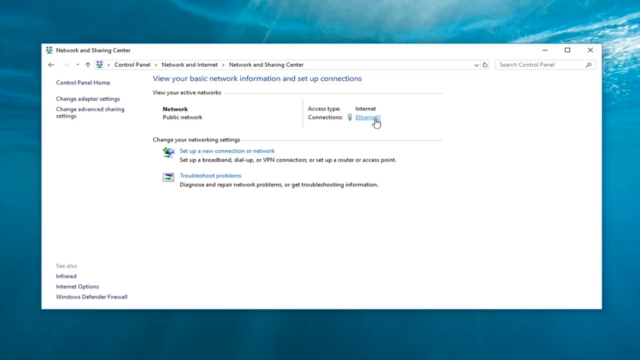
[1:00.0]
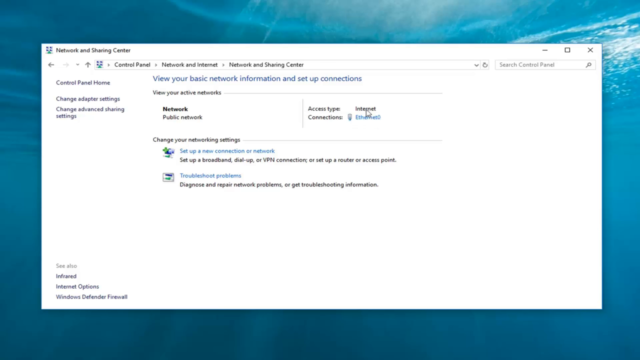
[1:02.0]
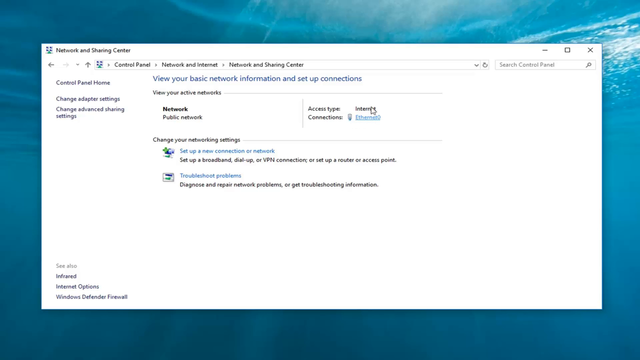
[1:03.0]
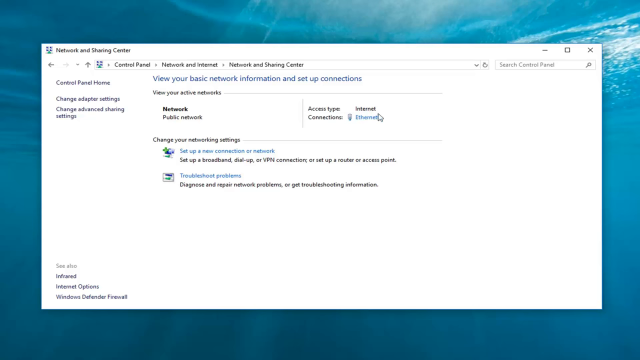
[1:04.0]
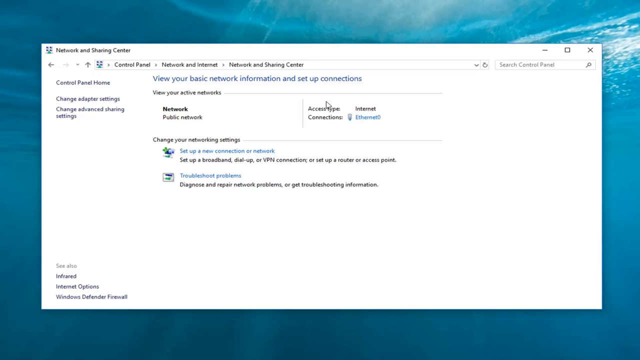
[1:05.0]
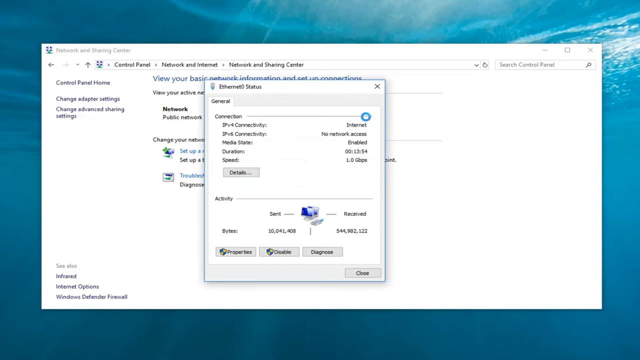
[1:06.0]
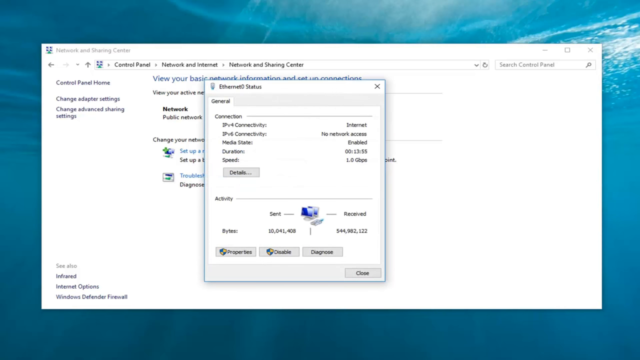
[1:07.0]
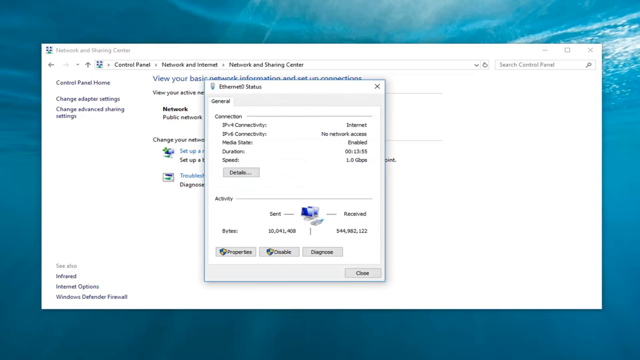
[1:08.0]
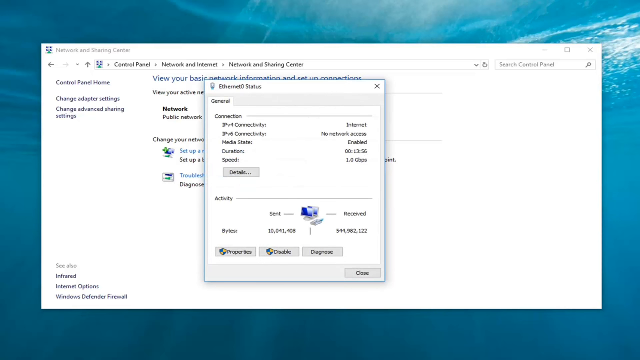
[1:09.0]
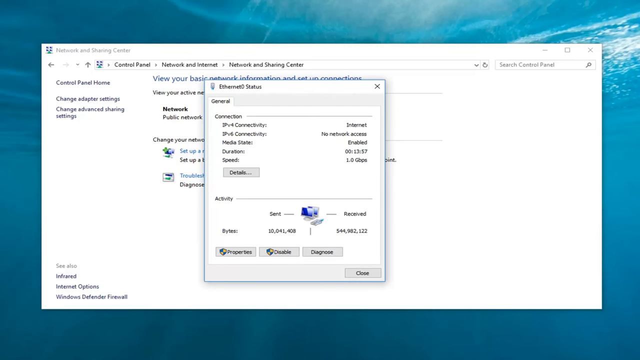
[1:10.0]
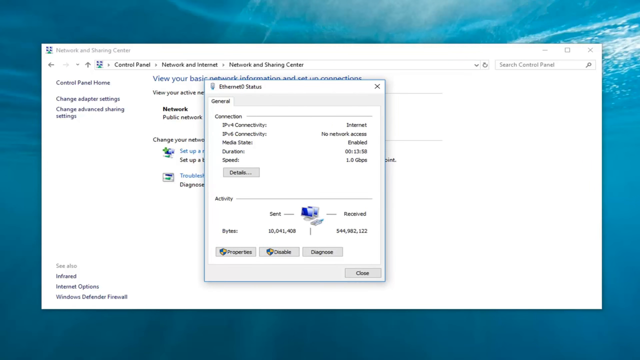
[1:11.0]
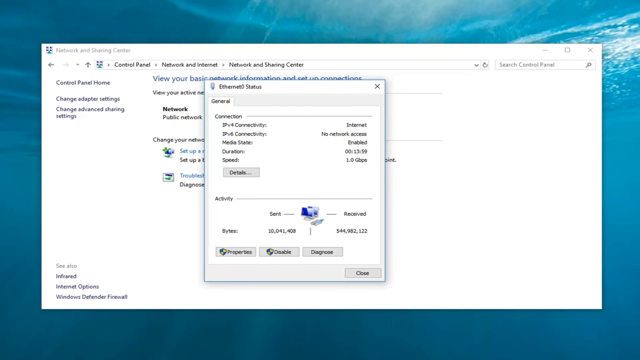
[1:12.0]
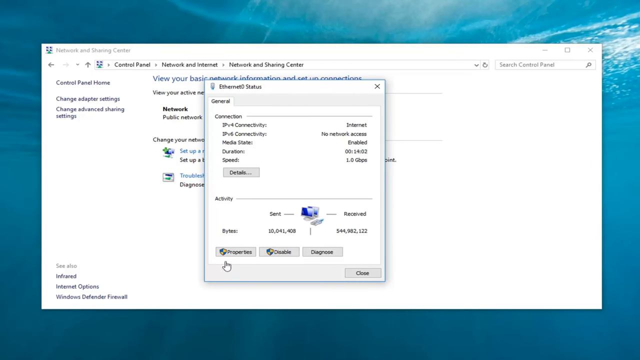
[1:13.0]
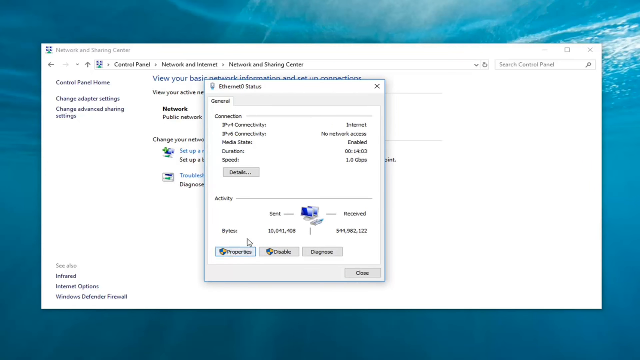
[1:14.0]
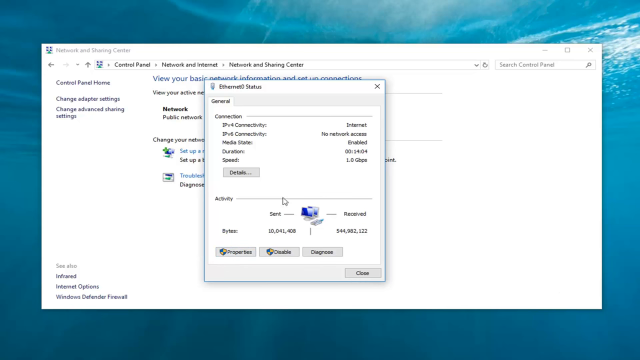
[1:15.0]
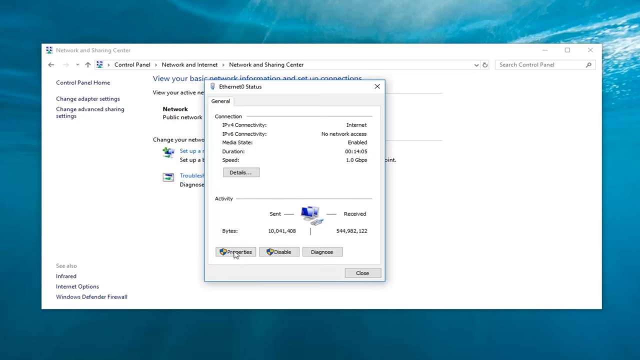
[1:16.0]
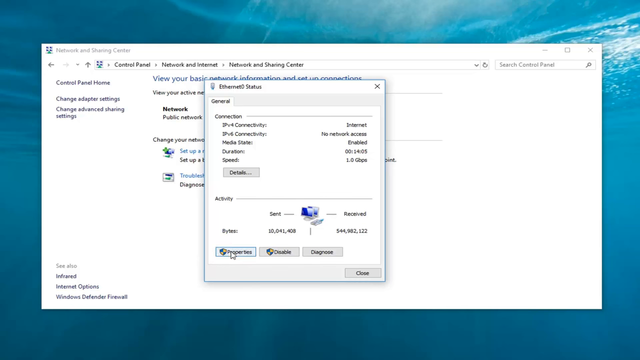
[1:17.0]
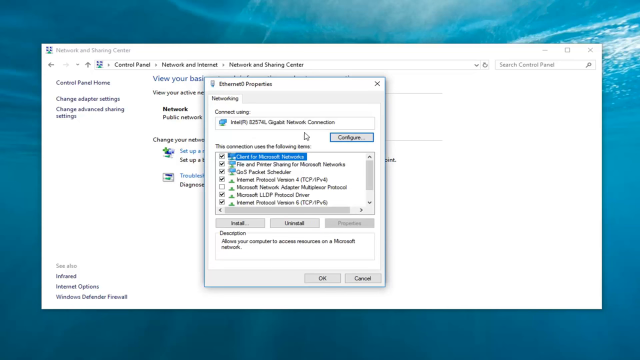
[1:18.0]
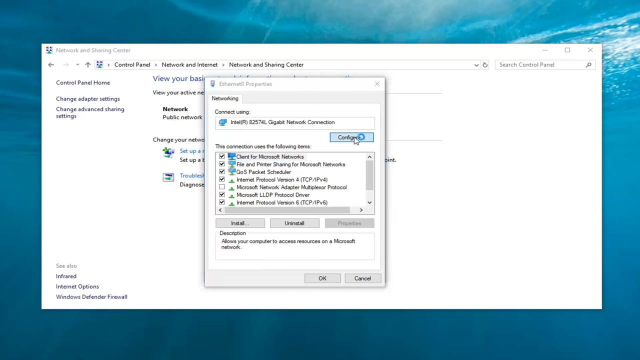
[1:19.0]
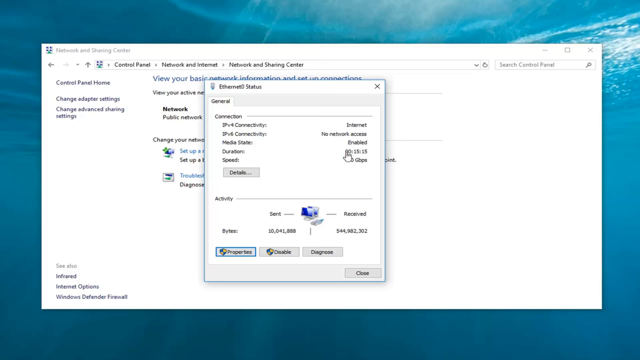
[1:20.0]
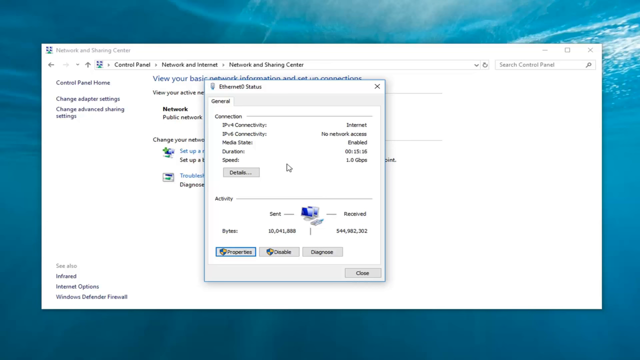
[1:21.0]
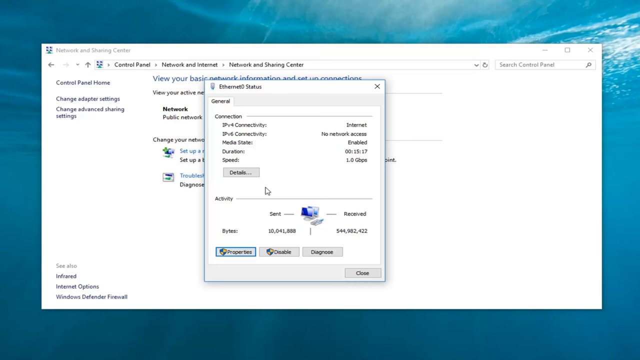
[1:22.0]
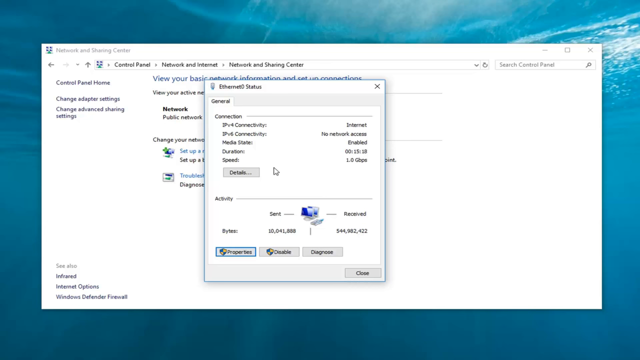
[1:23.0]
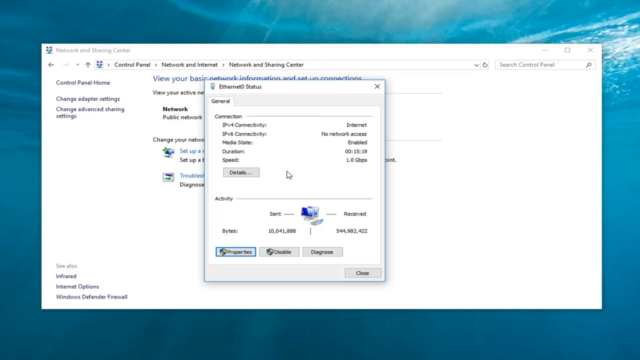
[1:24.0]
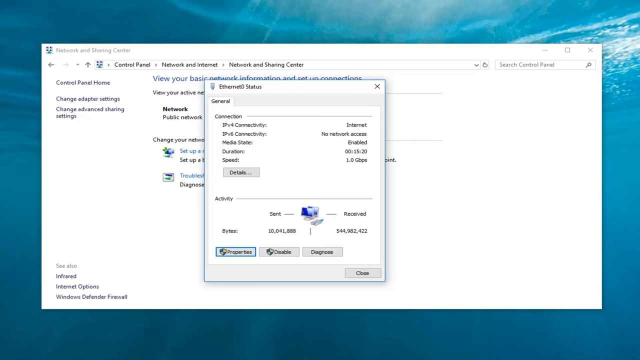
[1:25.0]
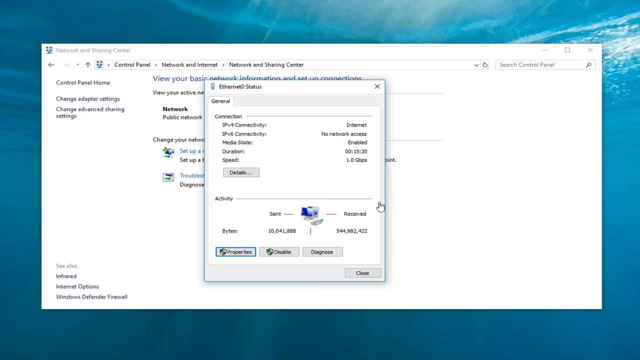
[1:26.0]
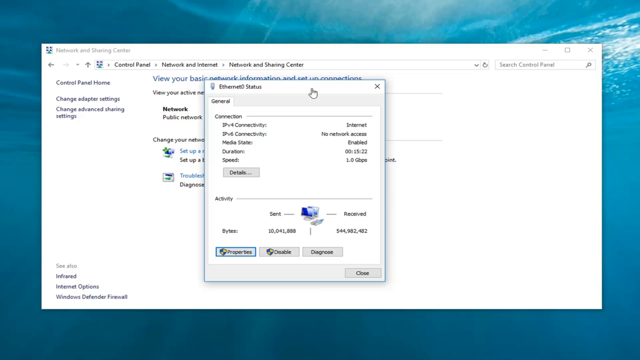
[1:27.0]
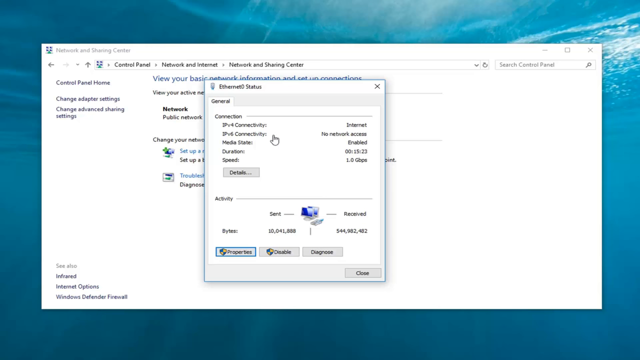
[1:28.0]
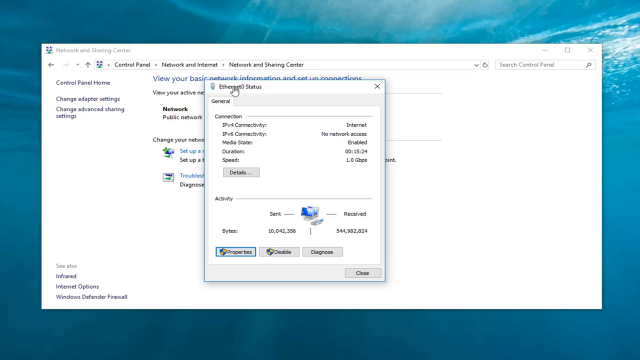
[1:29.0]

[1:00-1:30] A window with status information on connection, connectivity, activity and more comes up as another sub-window. The mouse arrow goes over Properties, Disable and Diagnose, and another sub-menu is pulled up. The mouse arrow hovers over the various components of the window, which show basic network information, connection setup, and specifically internet connections and Ethernet status. Sub-menus and sub-windows are opened and looked into, and the windows take up a majority of the screen, with the ocean view with the swimmer in the background.